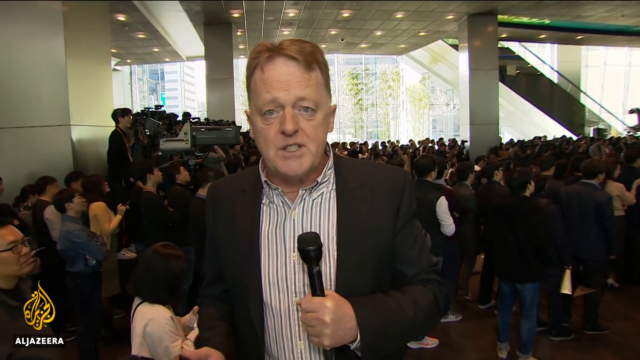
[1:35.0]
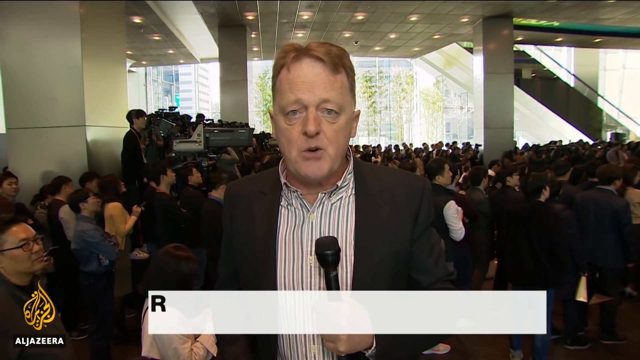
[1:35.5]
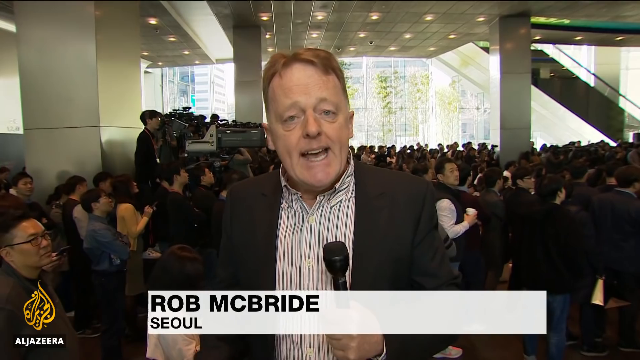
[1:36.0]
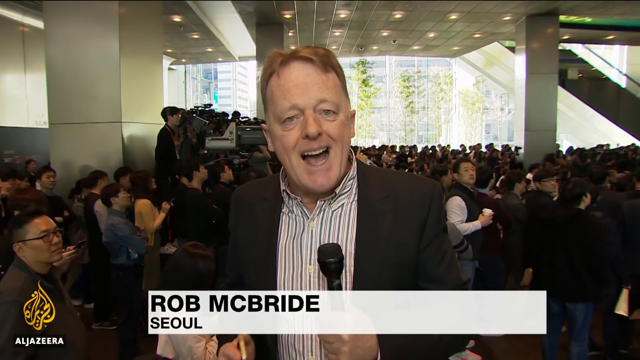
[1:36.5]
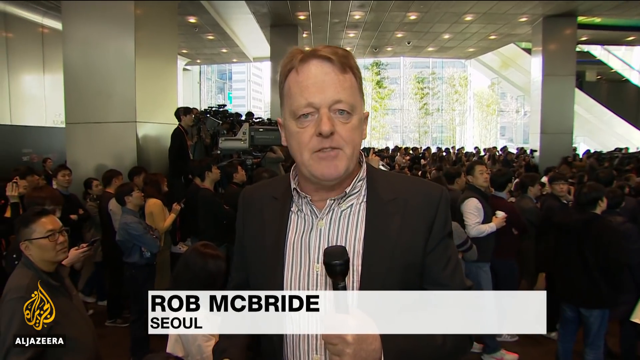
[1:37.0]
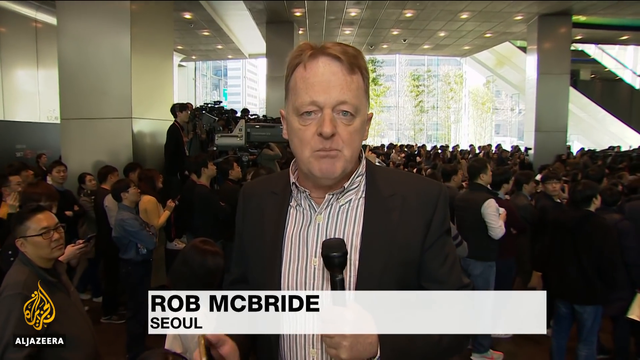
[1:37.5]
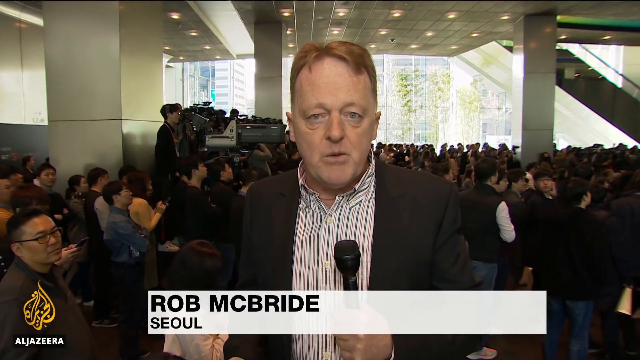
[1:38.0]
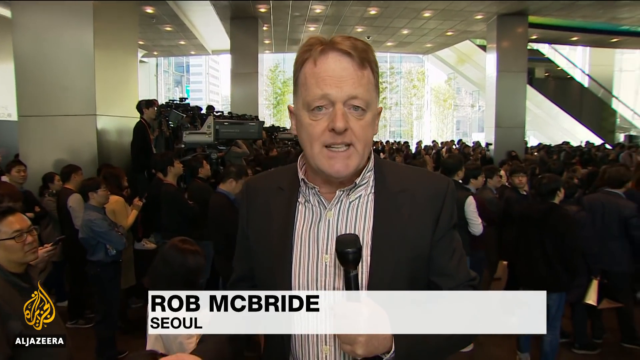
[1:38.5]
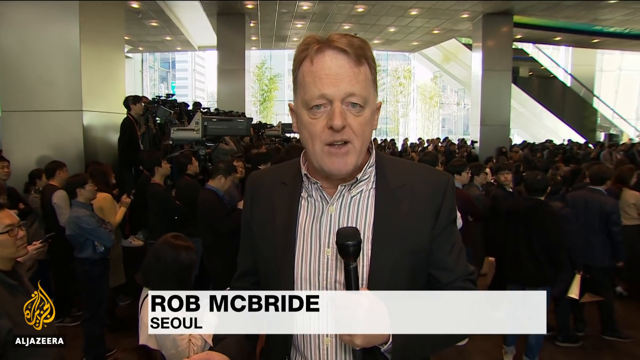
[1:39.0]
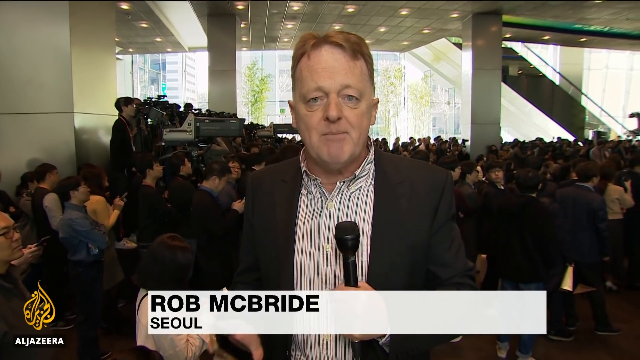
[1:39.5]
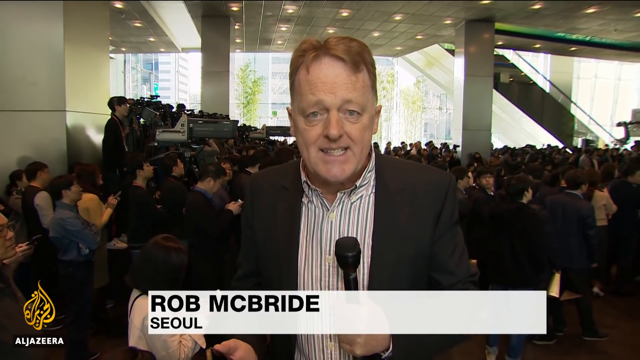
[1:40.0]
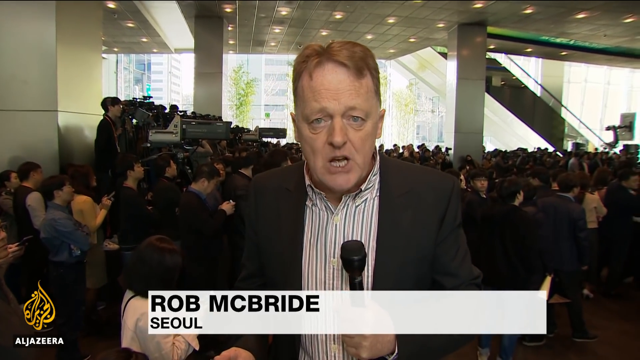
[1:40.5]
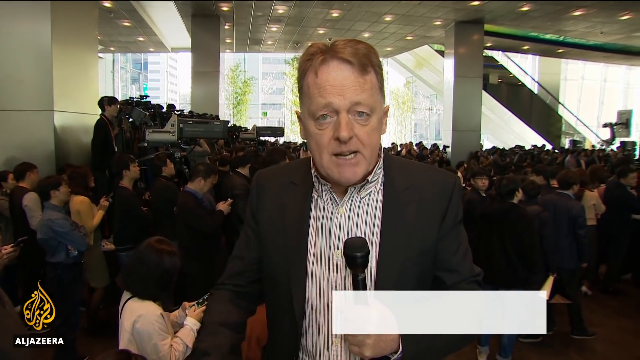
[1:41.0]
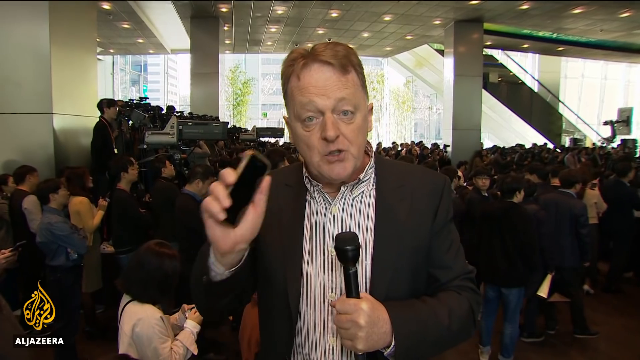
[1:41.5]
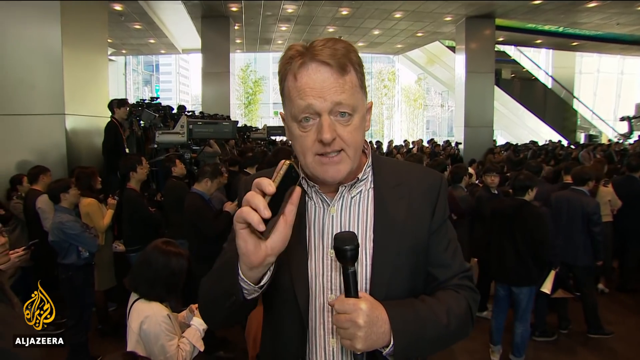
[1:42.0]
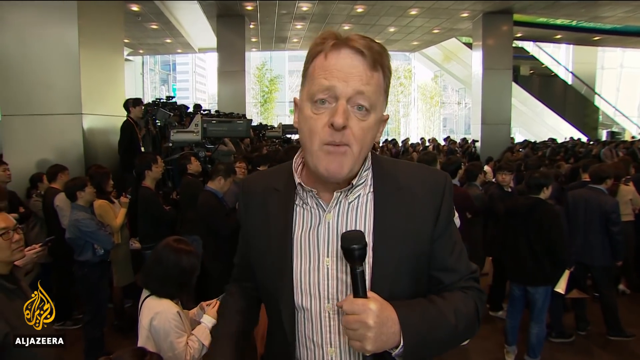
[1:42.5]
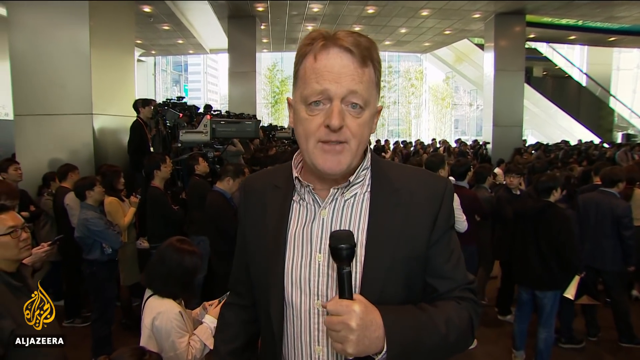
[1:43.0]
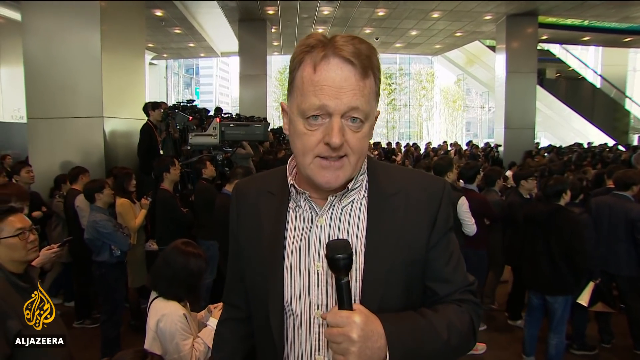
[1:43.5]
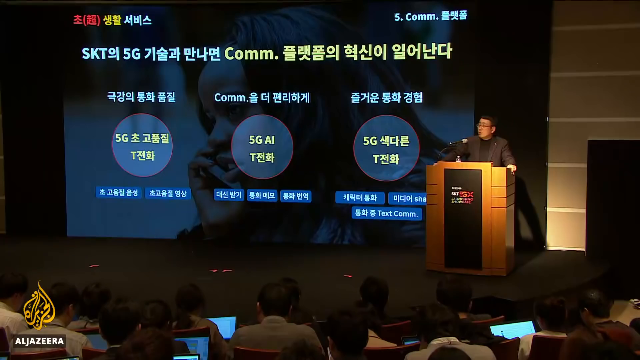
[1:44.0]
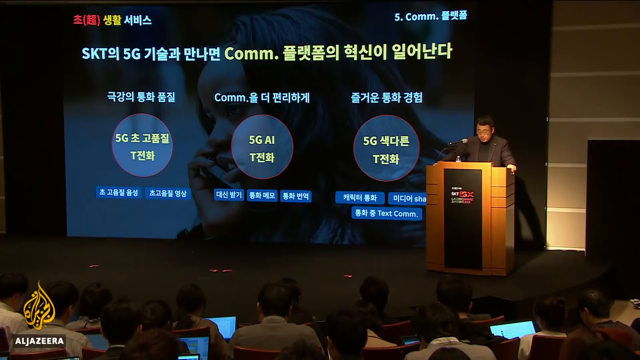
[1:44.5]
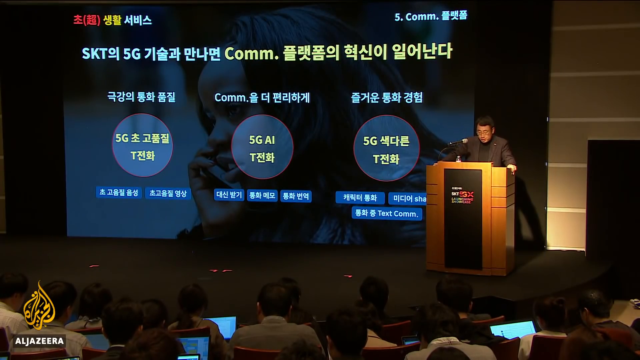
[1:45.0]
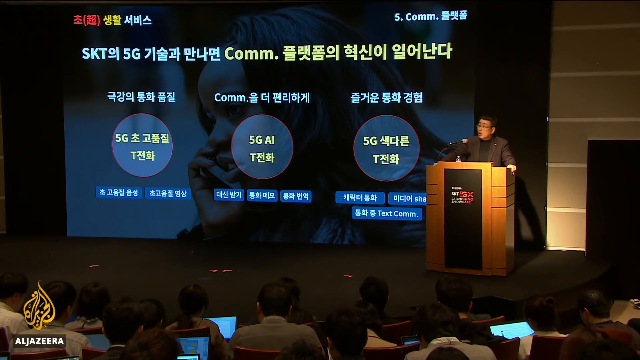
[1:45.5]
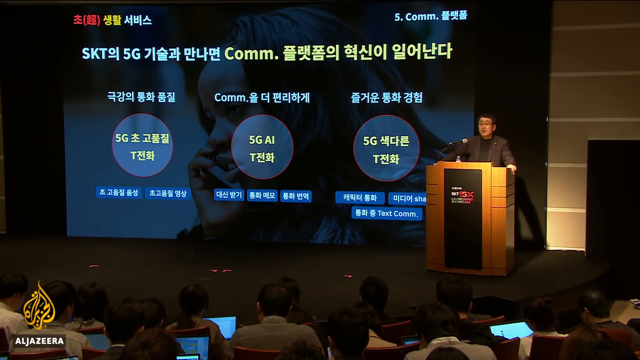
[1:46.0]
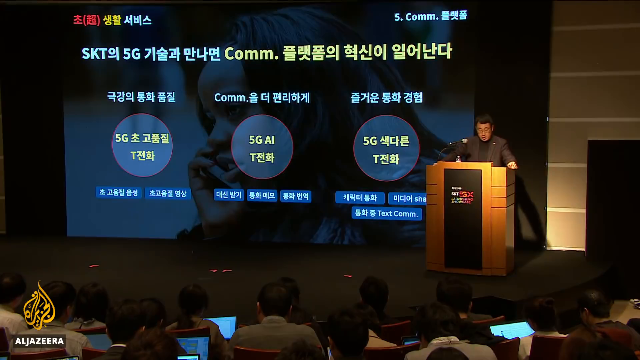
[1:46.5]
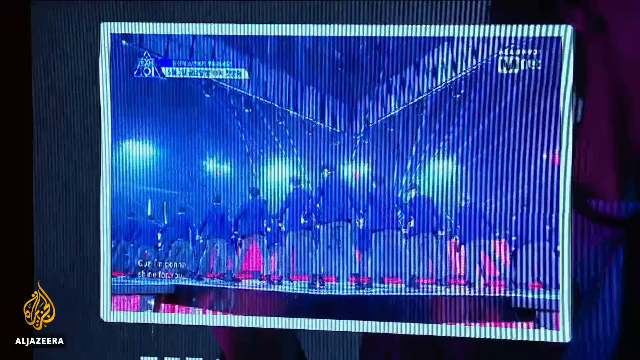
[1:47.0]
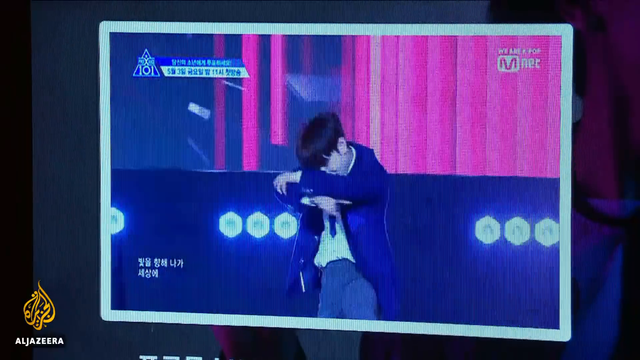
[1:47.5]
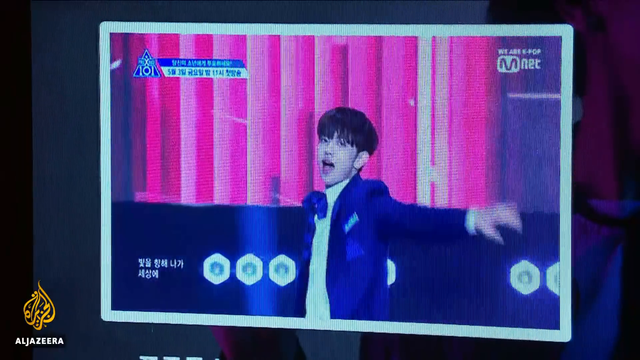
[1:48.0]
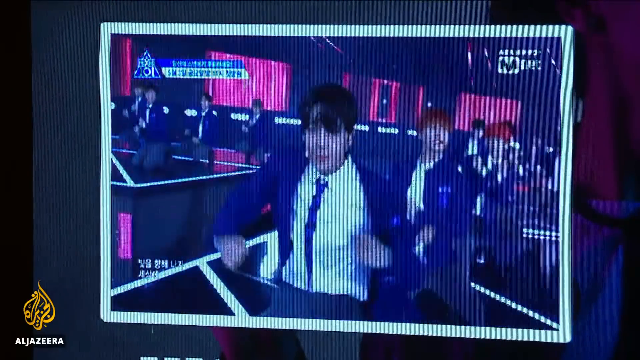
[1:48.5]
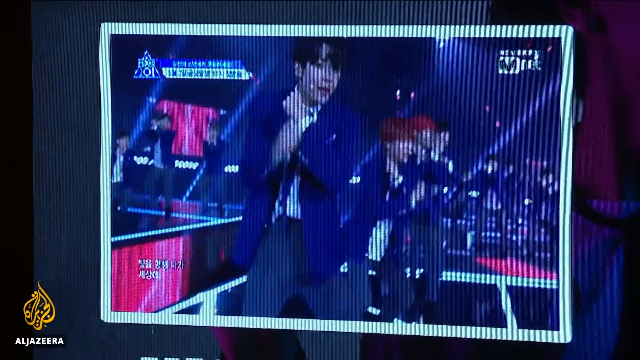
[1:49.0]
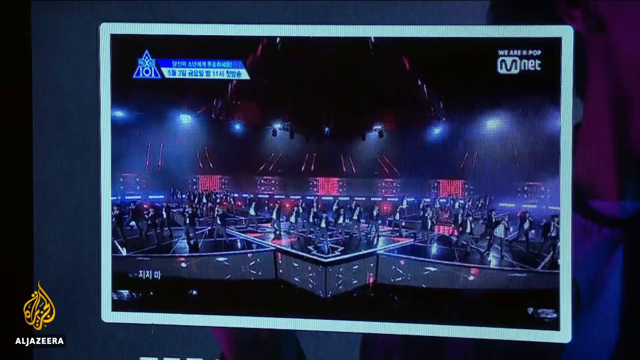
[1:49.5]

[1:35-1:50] A white man with reddish-blonde hair, wearing a brown suit and a white shirt with brownish stripes, holds a microphone and speaks to the camera. He is Rob McBride, and the text says he is in "Seoul." He stands amid a crowd gathered at a launch, speaking emphatically at the camera and showing the camera the cell phone he holds in his hand. The camera then shows a man at a podium on a stage, with a projection of Korean letters and numbers on a large screen behind him. The screen then shows a K-pop star singing and dancing, who is then joined by the rest of the members of his K-pop band.